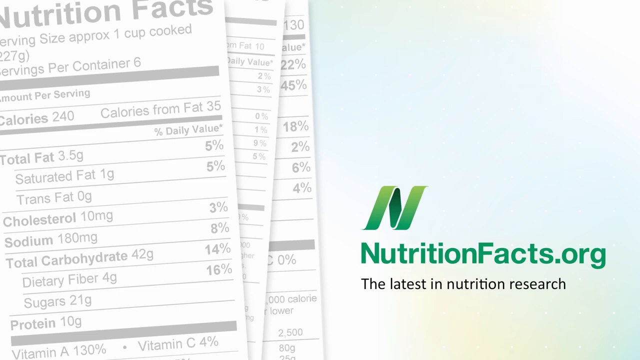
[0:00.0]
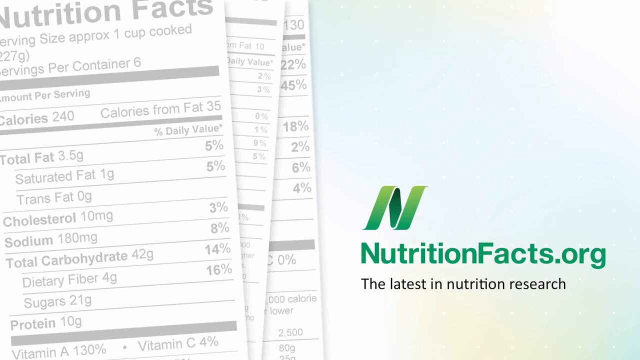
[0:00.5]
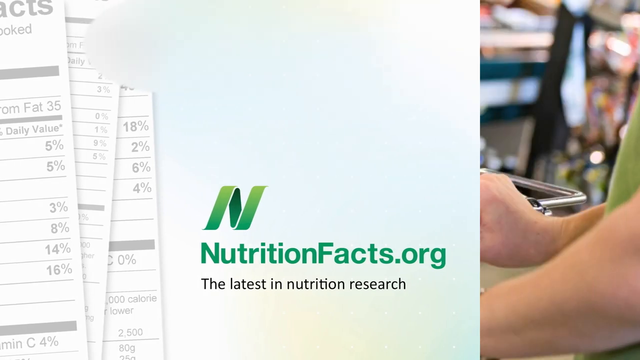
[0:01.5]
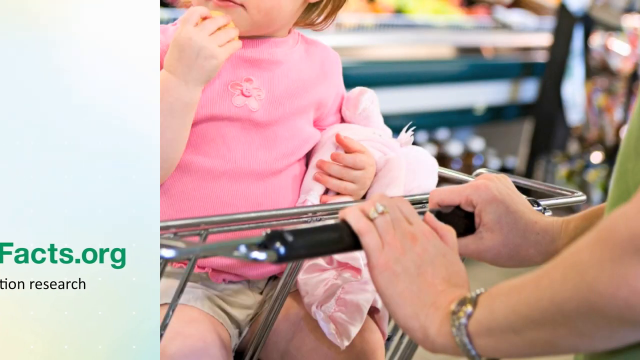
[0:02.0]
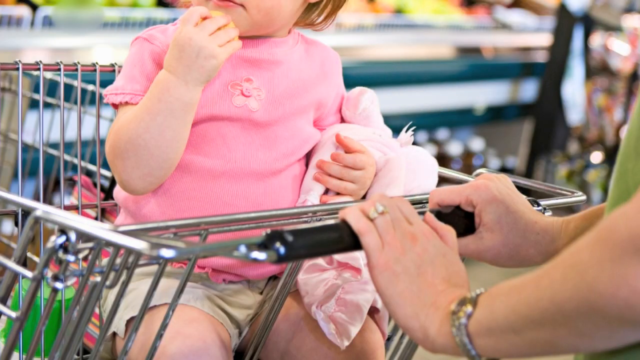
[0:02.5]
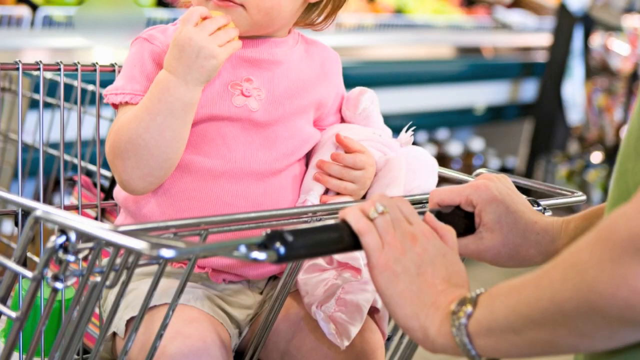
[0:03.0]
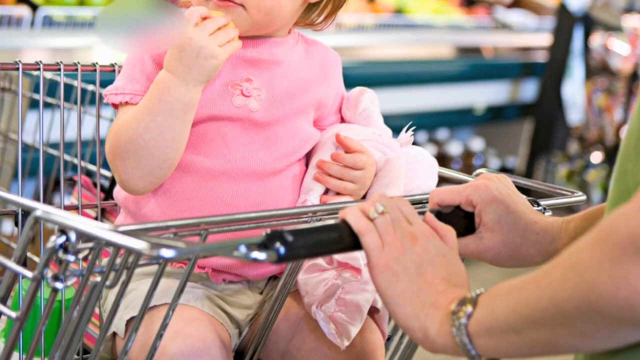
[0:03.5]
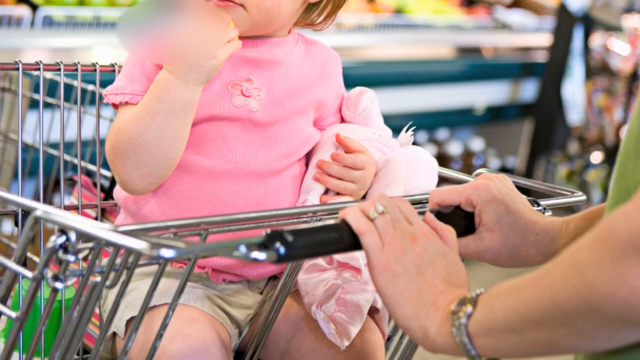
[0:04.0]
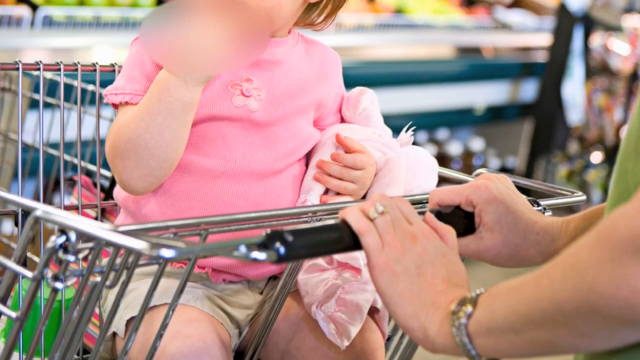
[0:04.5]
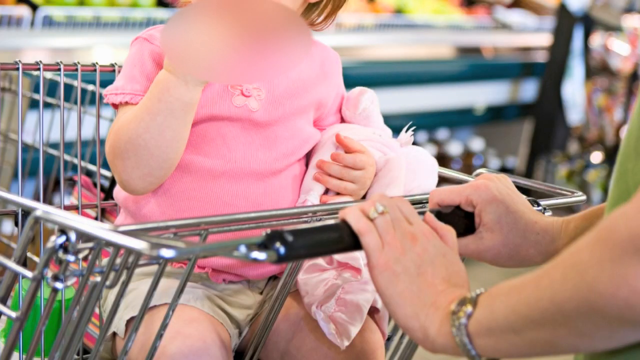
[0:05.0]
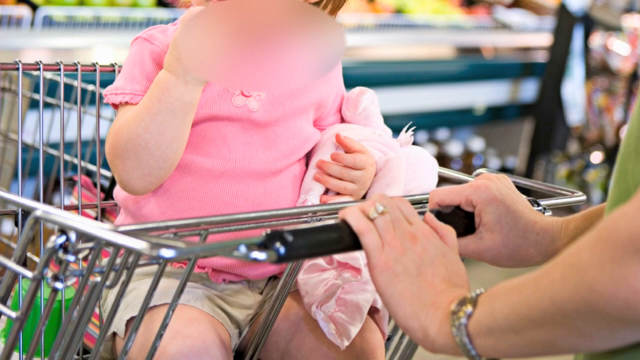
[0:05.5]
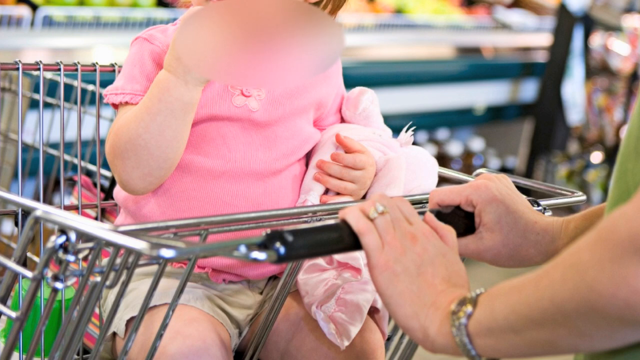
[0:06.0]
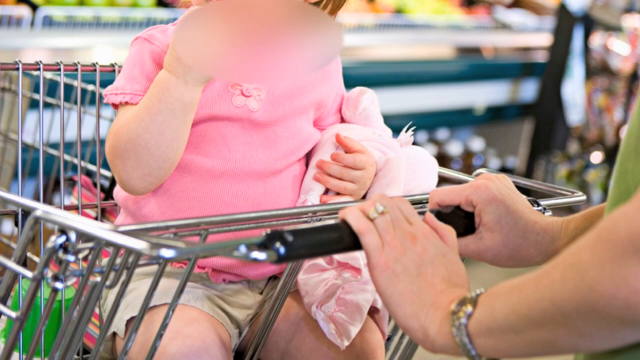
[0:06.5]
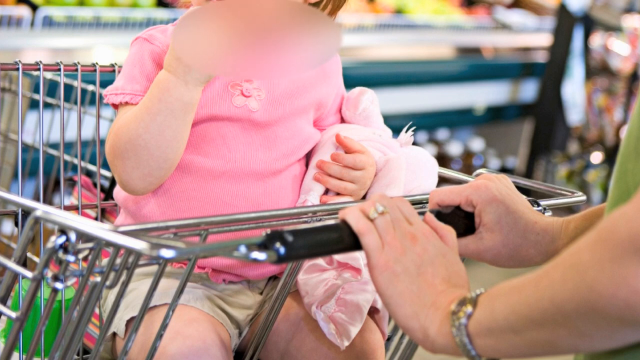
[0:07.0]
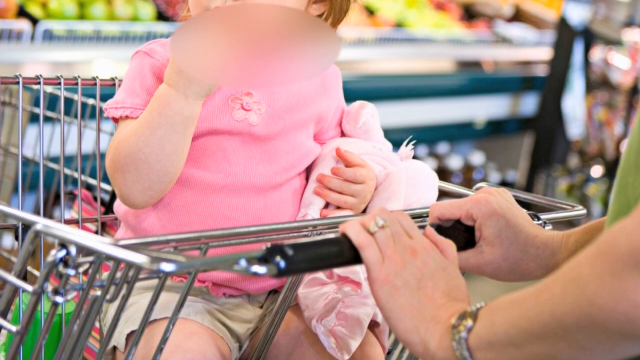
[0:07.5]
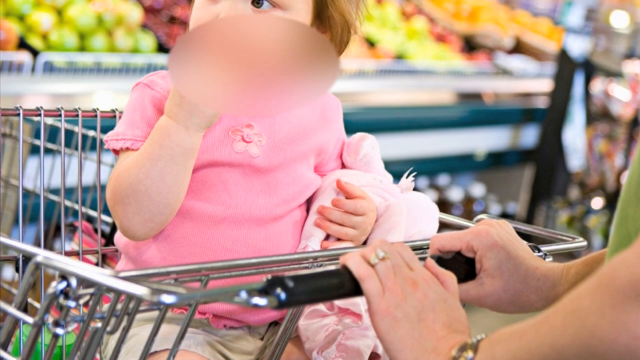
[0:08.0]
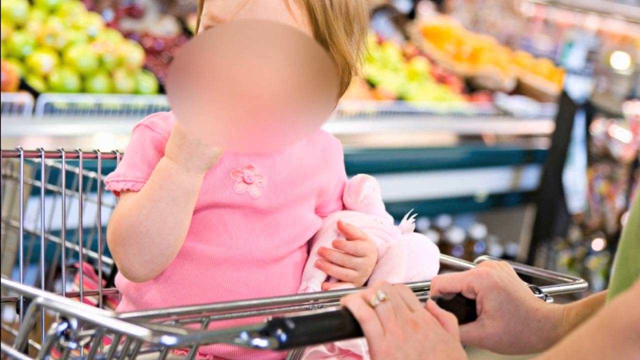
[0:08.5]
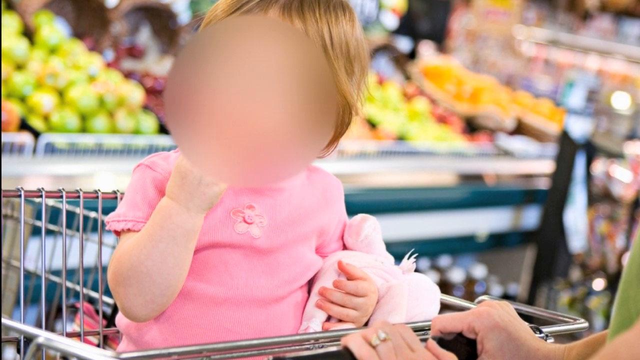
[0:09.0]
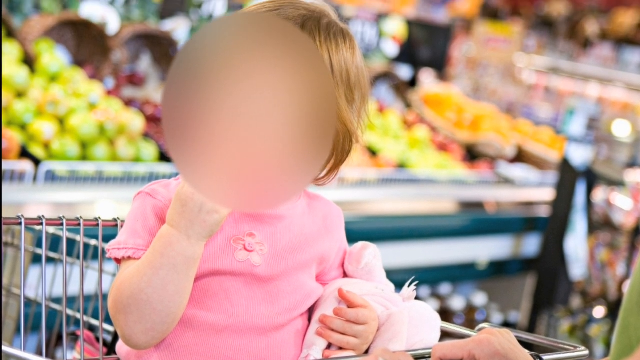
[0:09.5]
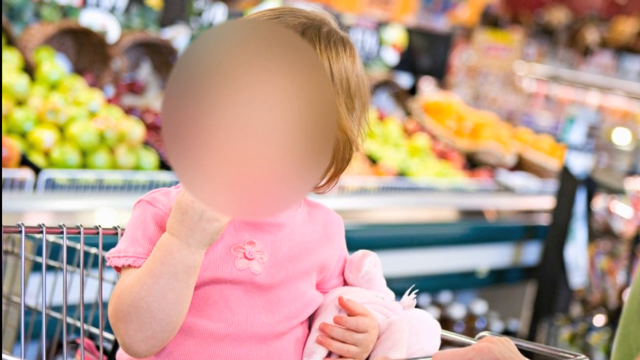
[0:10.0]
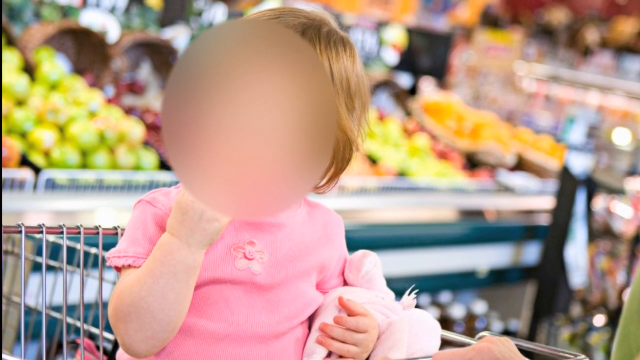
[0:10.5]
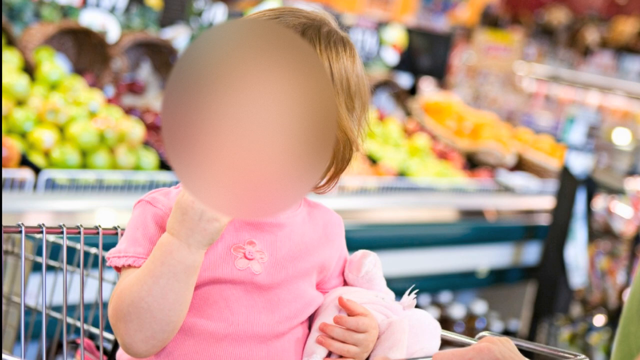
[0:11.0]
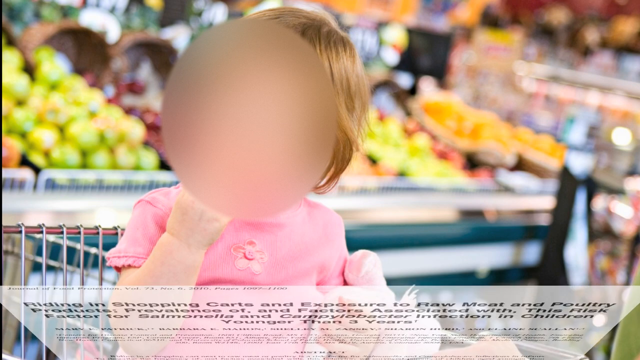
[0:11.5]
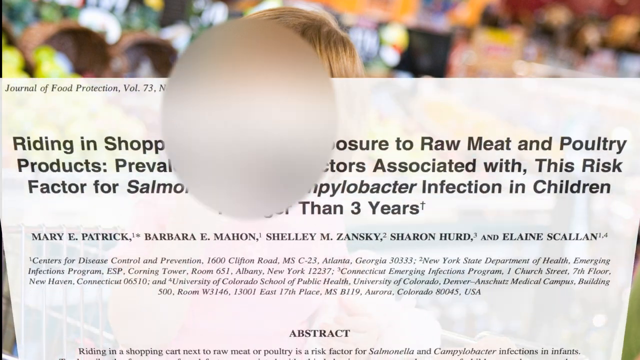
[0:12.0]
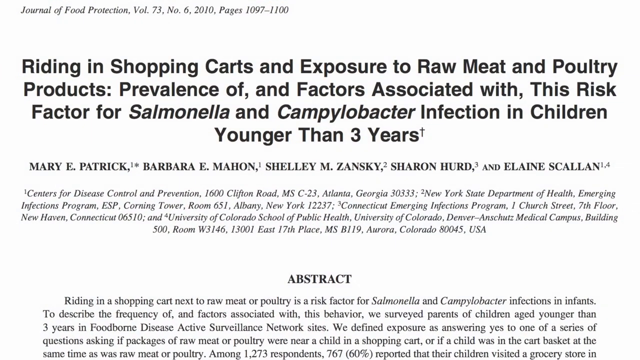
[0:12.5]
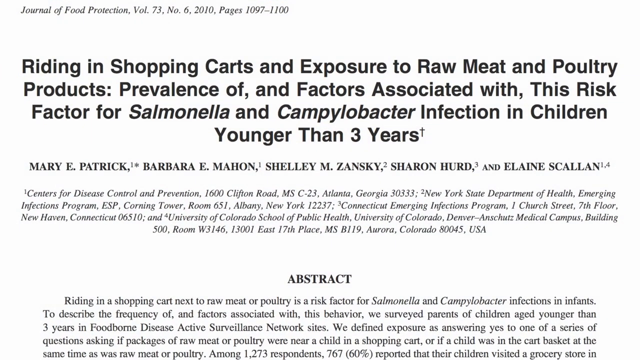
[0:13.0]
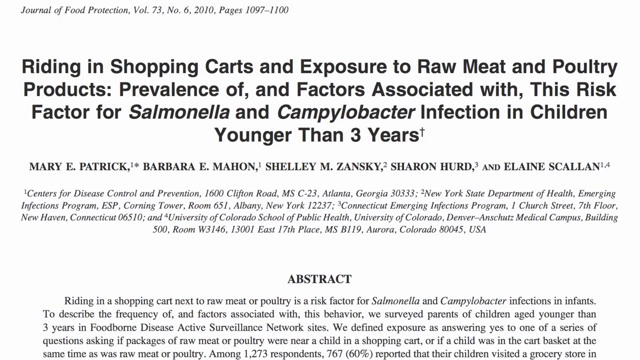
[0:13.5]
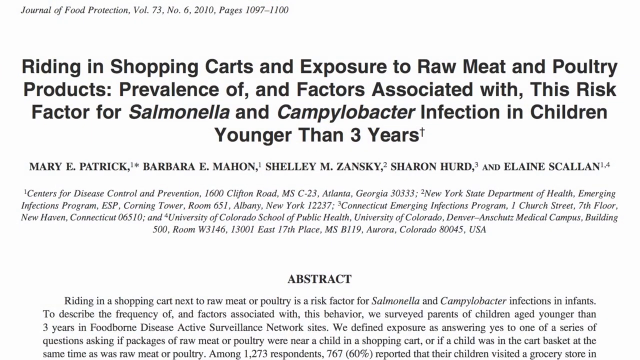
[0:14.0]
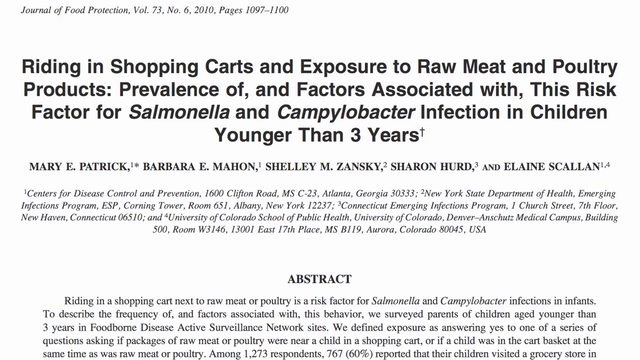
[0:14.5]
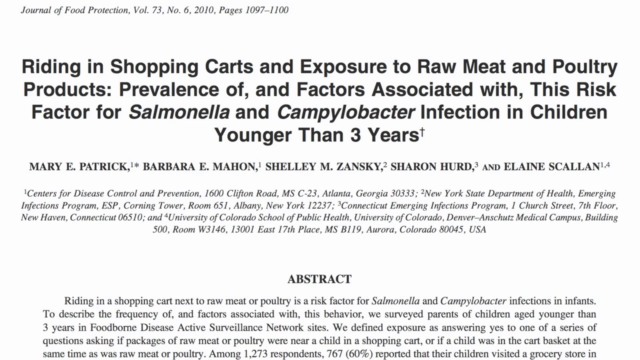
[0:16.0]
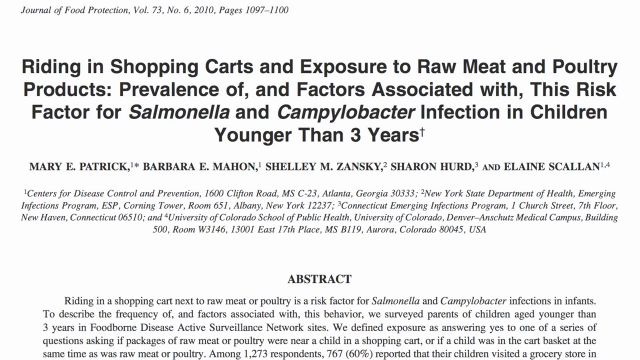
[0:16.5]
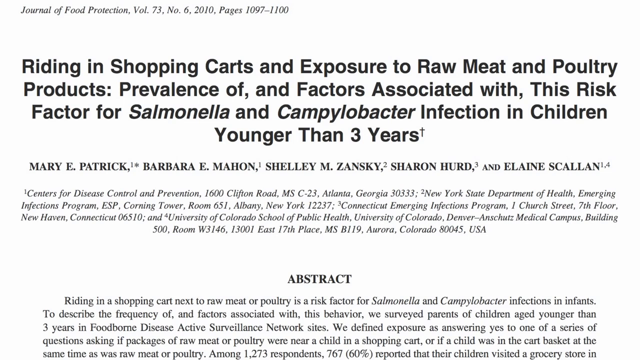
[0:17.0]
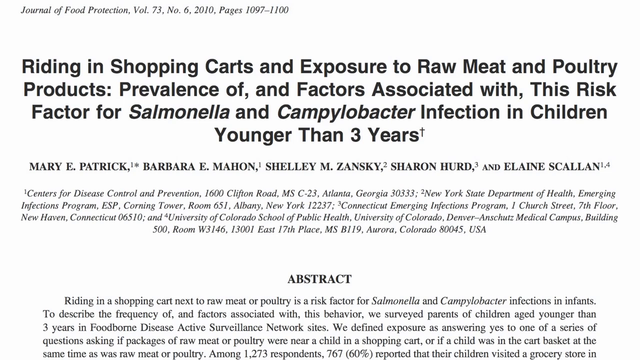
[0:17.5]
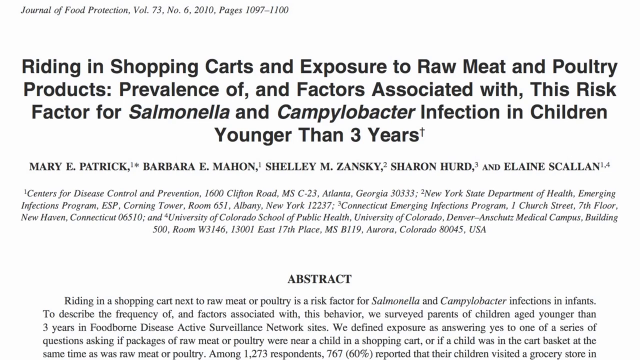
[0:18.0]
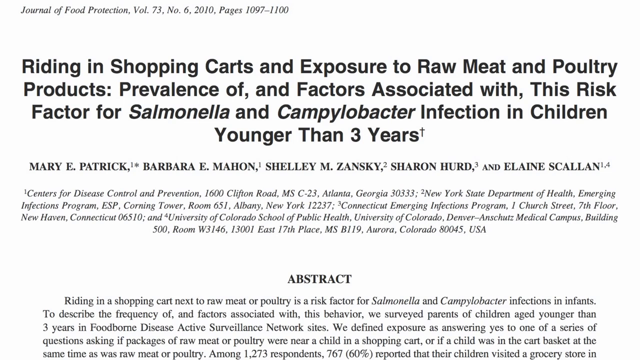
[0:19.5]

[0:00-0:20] On the left side of the frame, three nutrition facts labels are stacked one on top of the other, slightly spread out so a portion of each is visible: most of the top label, about a quarter of the middle label, and about a tenth of the label behind the other two. The background is aquamarine, and in the lower right corner are the words "nutritionfacts.org, the latest in nutrition research." Next, a woman pushes her child in a shopping cart. The child appears to be a little girl with medium-length blonde hair. She has her left arm bent at the elbow with her hand and fingers up toward her mouth, and she may be holding something orange in her hand. She holds her left arm close to her body, bent at the elbow, with a stuffed animal that appears to be pink in her arm. The mother looks like she is pushing the cart through a grocery store. The video pans up, revealing that they are in the produce department. A screen then appears on the video showing "riding in shopping carts and exposure to raw meat and poultry products, prevalence of, and factors associated with the risk factor of Salmonella and Campylobacter infection in children younger than three years."